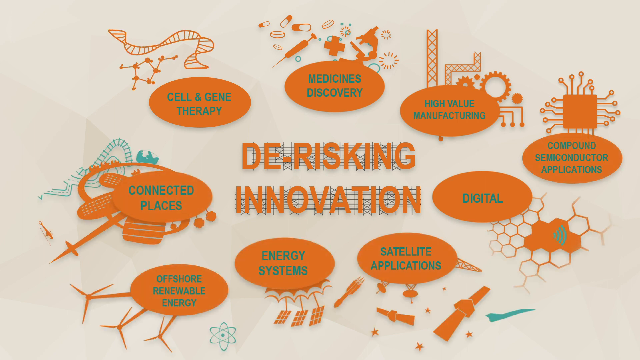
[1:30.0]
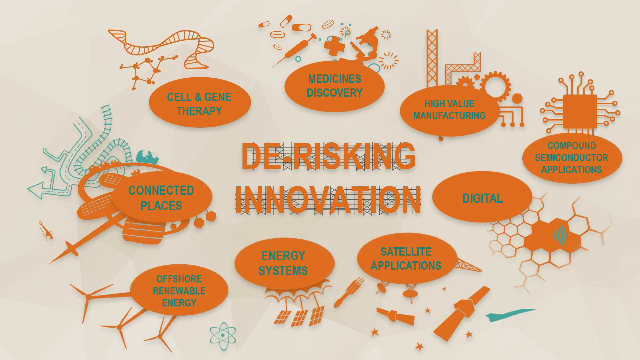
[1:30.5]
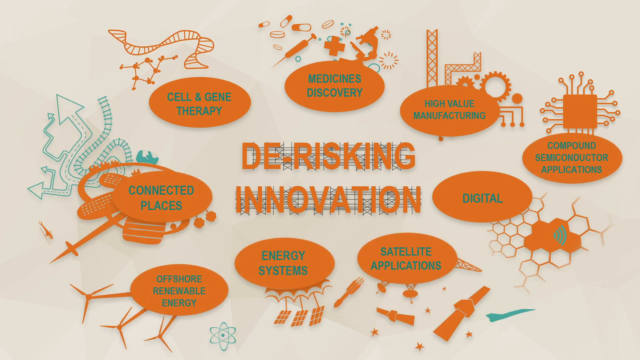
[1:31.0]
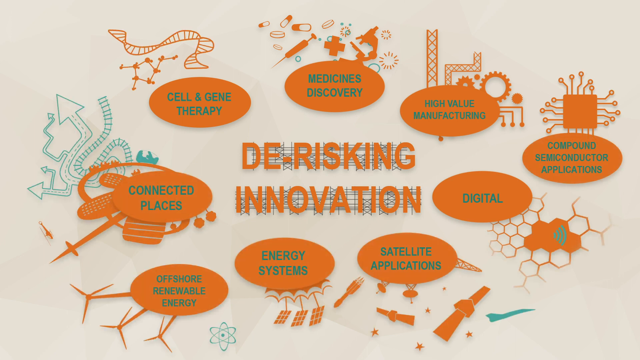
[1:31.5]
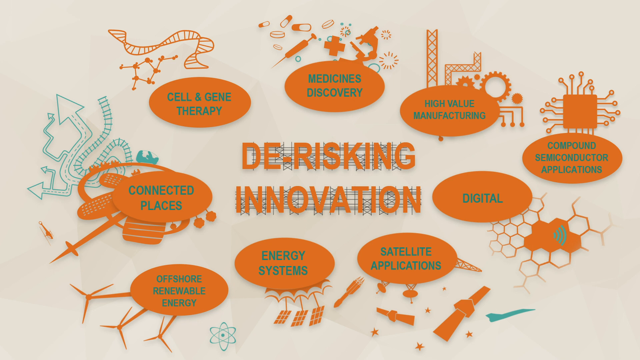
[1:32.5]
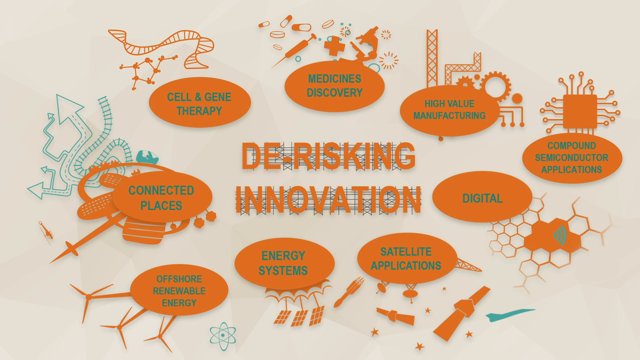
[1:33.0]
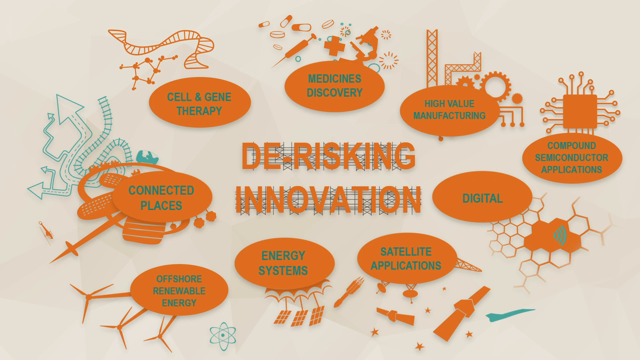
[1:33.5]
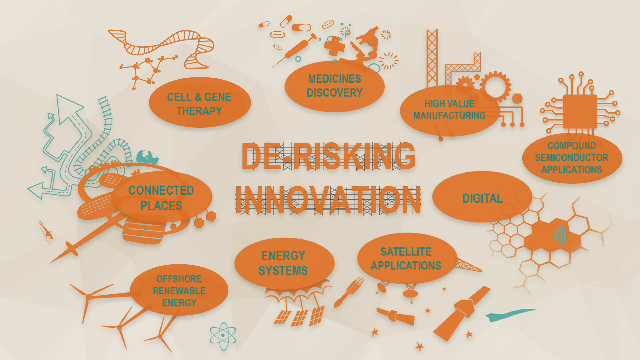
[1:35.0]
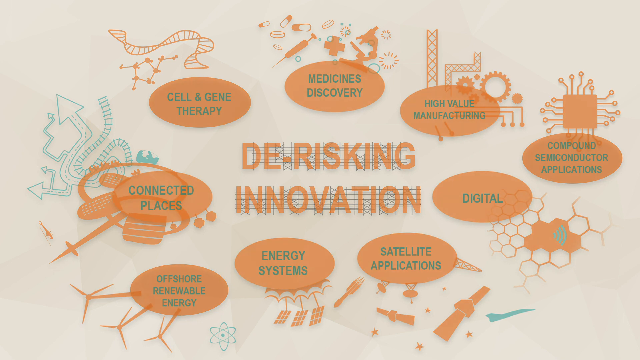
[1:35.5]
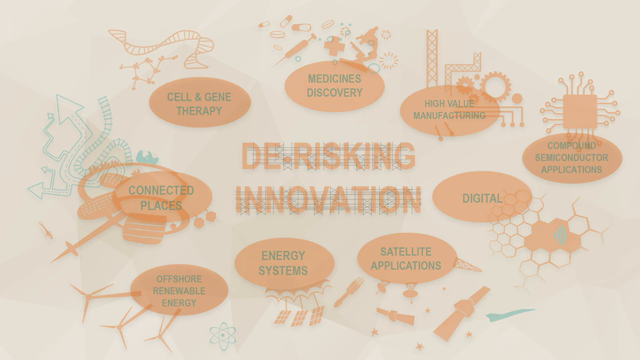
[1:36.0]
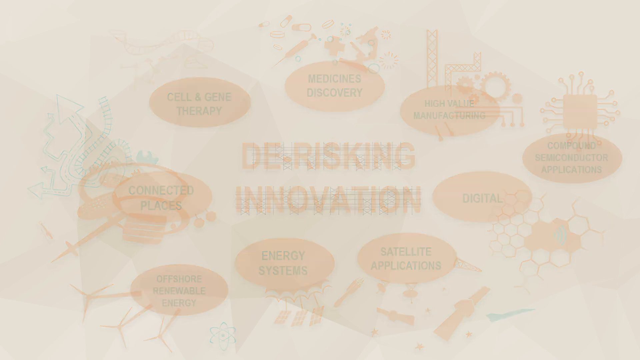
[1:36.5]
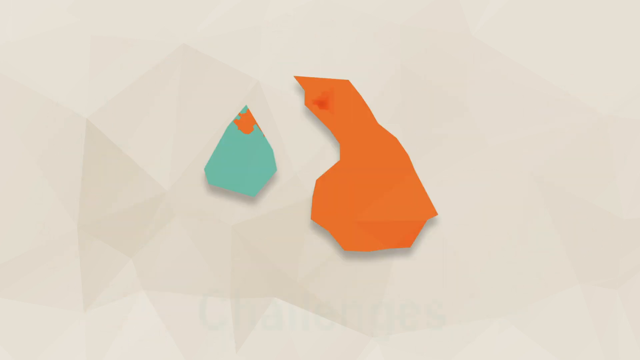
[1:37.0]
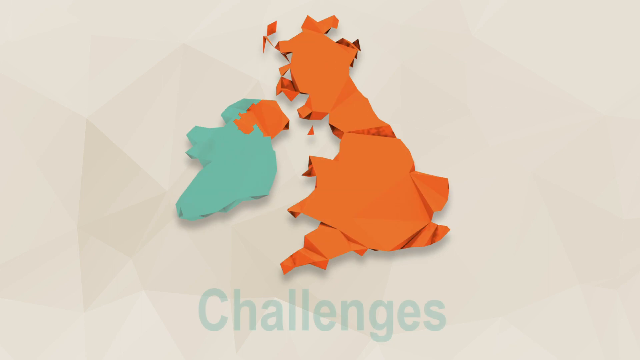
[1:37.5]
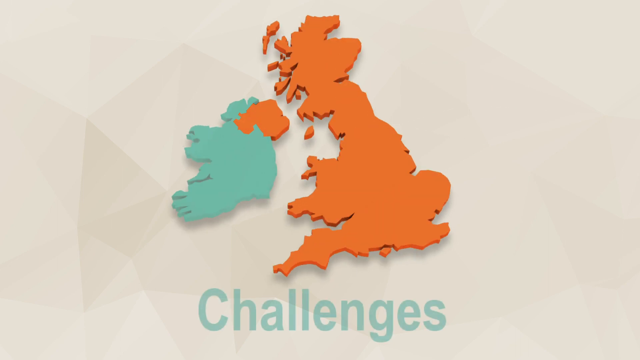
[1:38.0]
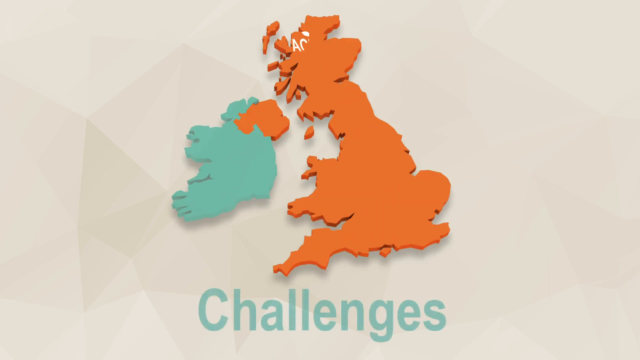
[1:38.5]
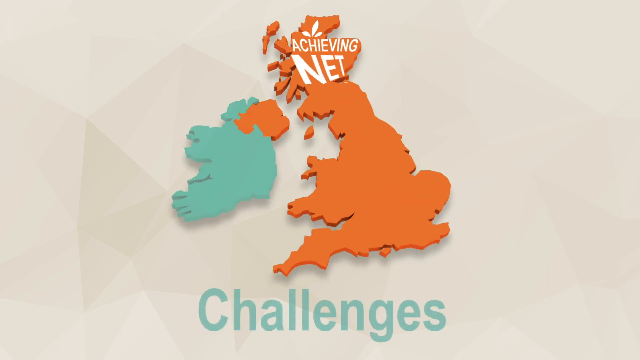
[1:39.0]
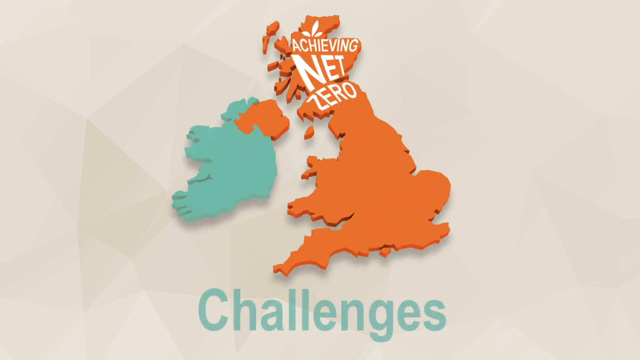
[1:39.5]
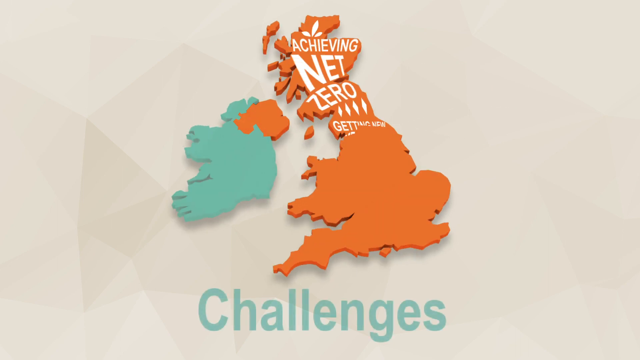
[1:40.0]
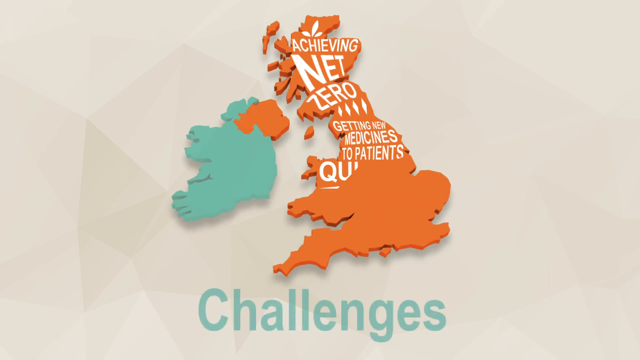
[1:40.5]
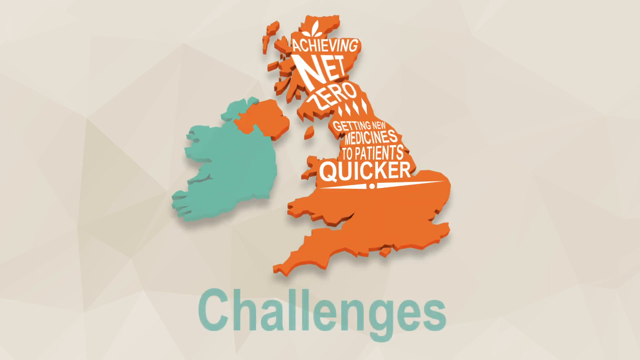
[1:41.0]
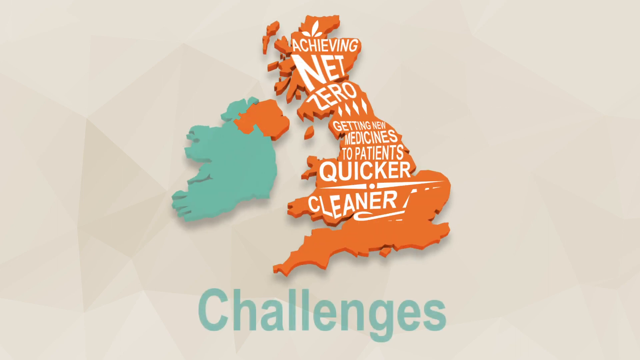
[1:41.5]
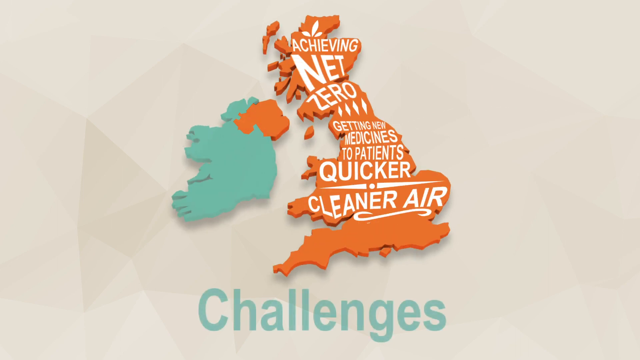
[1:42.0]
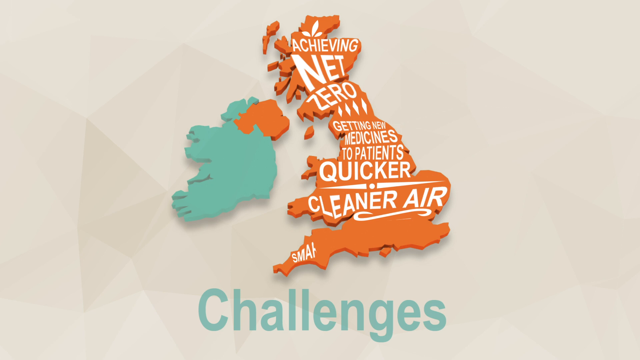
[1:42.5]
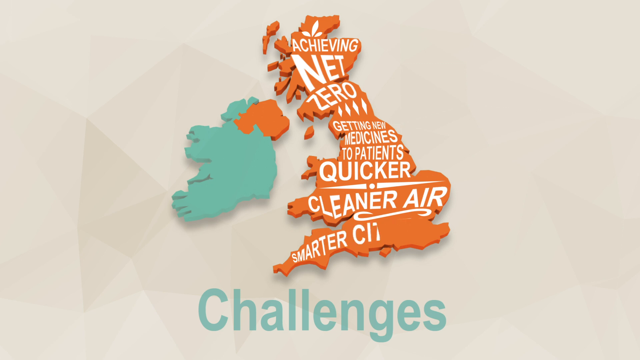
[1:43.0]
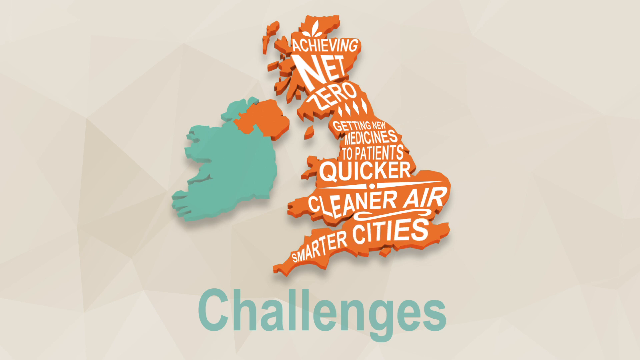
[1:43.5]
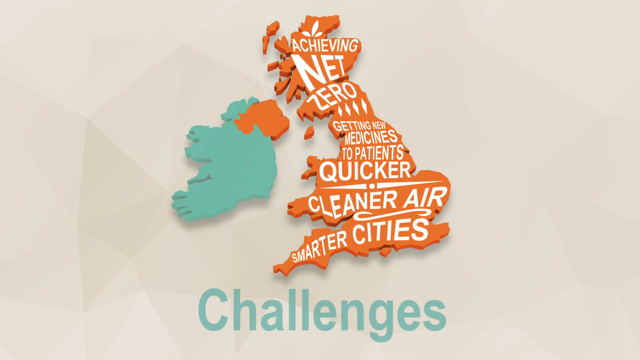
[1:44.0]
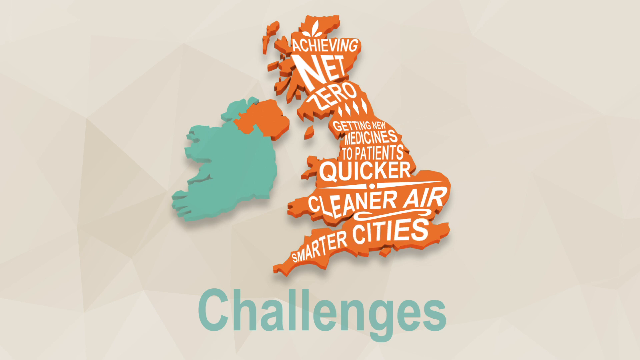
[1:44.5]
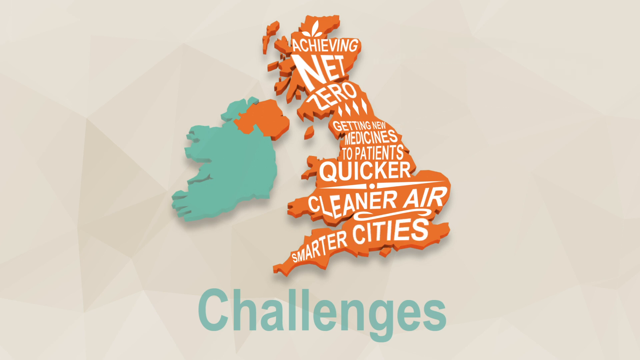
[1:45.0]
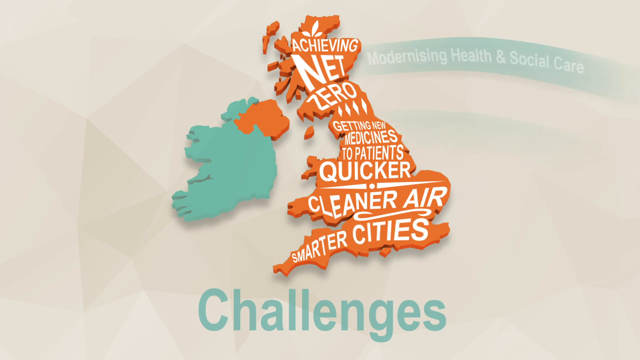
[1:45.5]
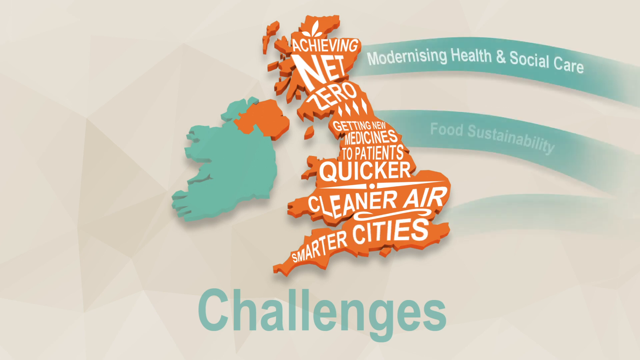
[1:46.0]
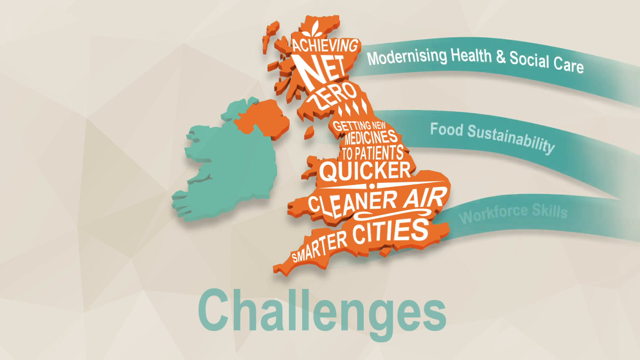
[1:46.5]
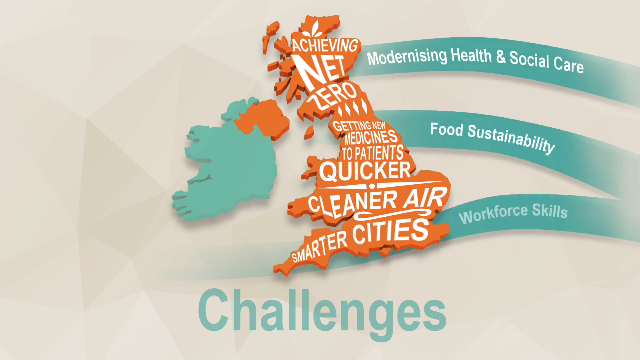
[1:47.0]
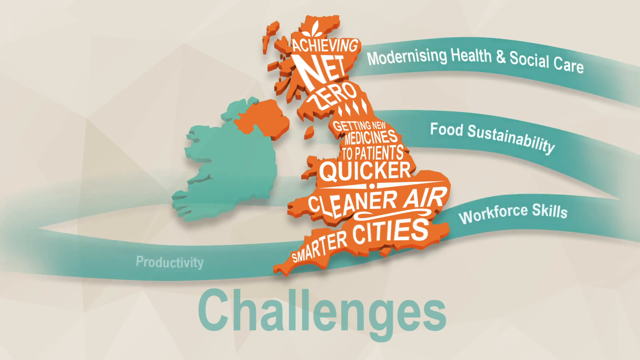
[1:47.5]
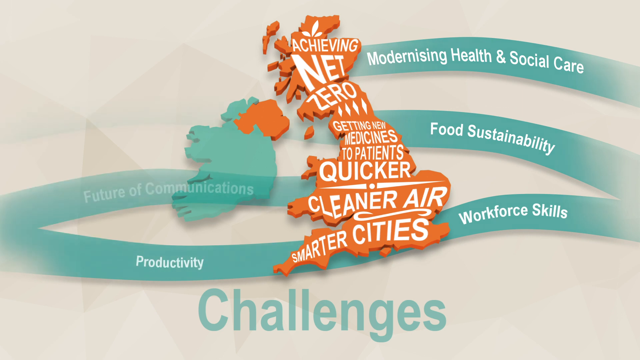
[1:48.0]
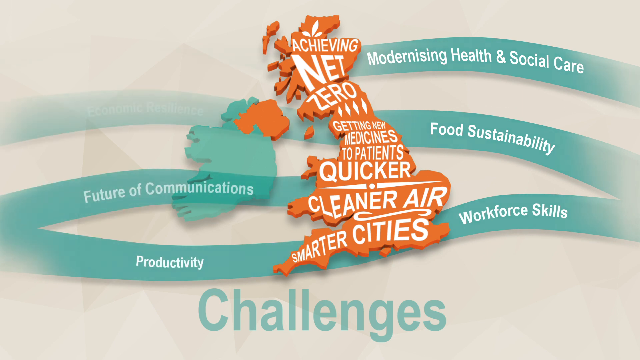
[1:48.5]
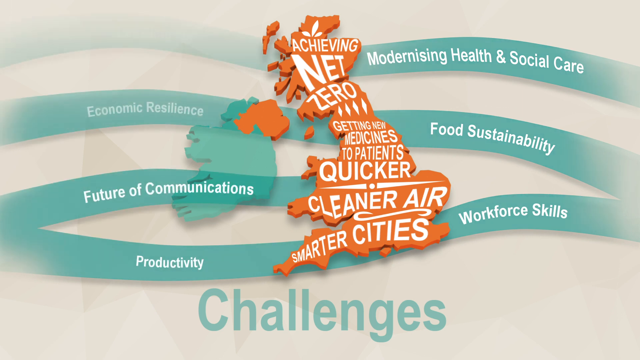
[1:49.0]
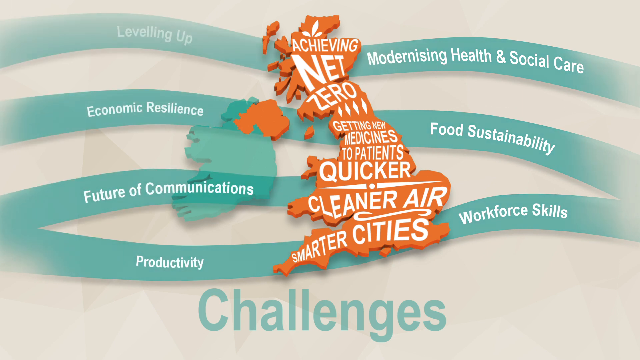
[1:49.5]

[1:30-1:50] The video looks at de-risking innovation, with several connections, and at challenges across the UK: achieving net zero, getting new medicines quicker, cleaner air and smarter cities. Pictures of technology continue, showing connections with medicine, technology, government, energy and academics, and connections highlighting the expertise and connectivity of individuals, organisations and government affiliates within the UKRI.